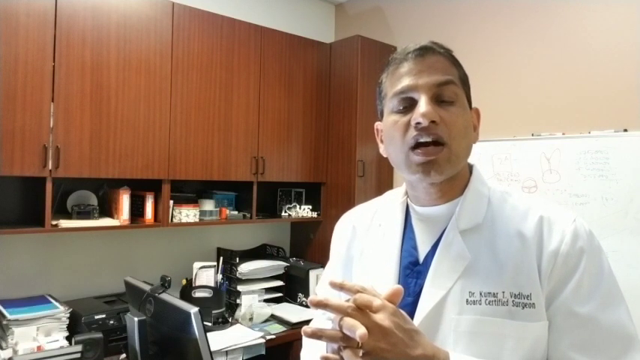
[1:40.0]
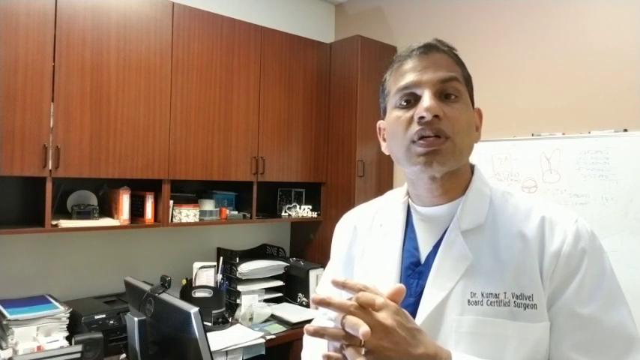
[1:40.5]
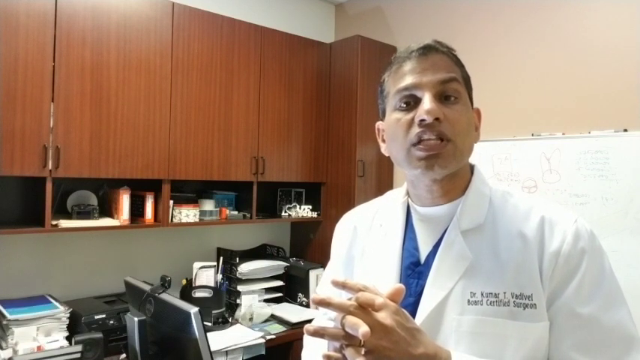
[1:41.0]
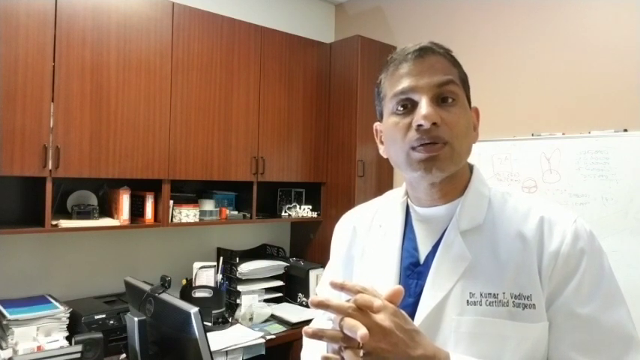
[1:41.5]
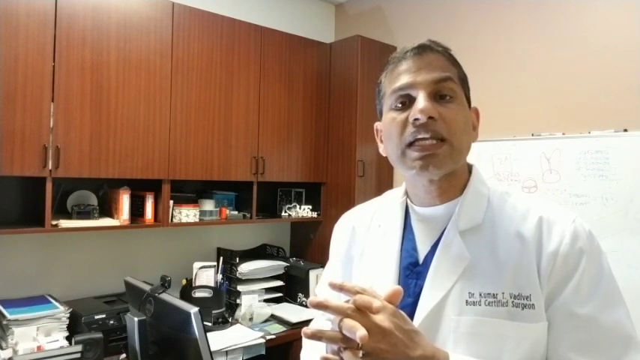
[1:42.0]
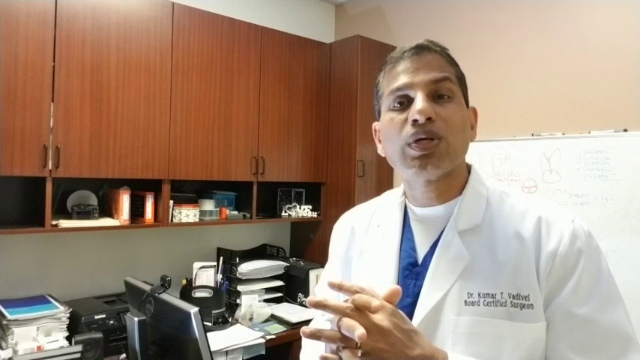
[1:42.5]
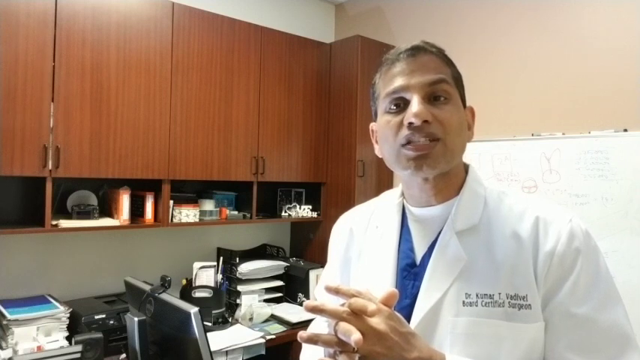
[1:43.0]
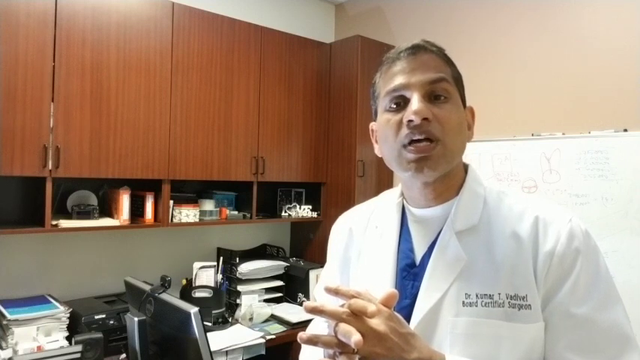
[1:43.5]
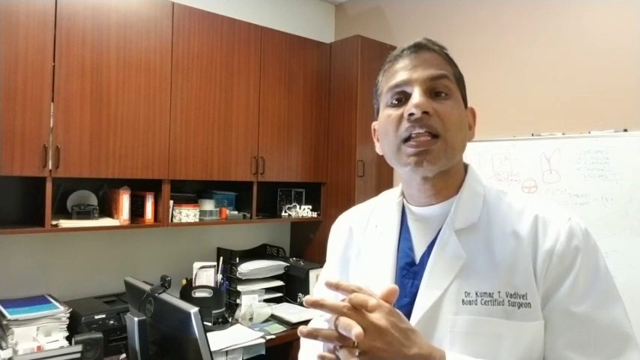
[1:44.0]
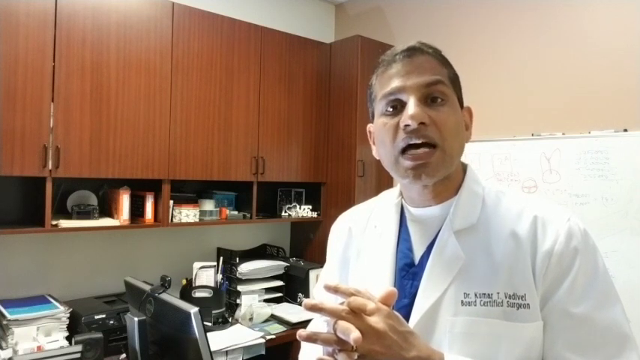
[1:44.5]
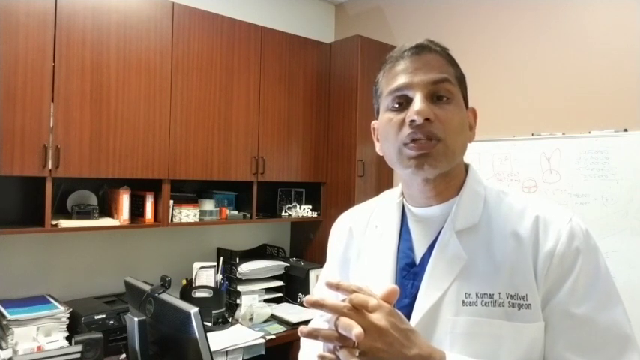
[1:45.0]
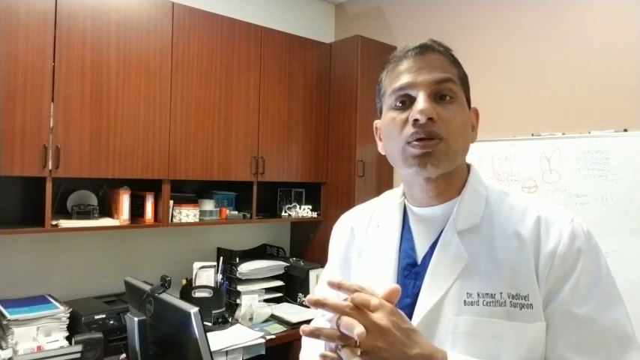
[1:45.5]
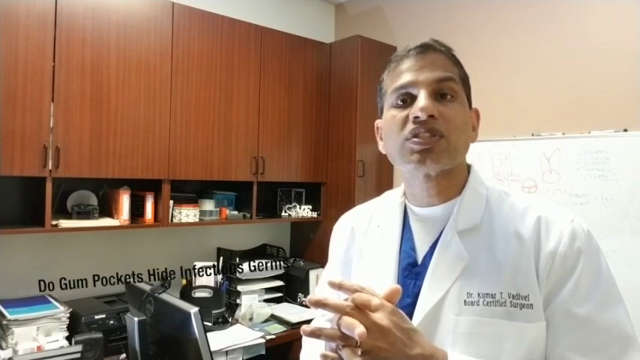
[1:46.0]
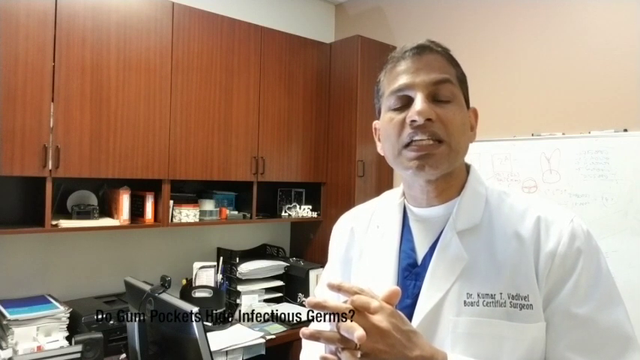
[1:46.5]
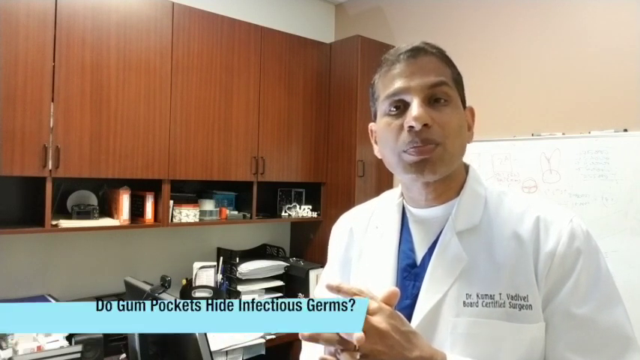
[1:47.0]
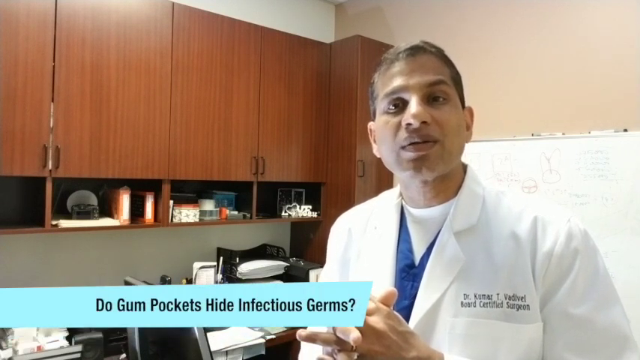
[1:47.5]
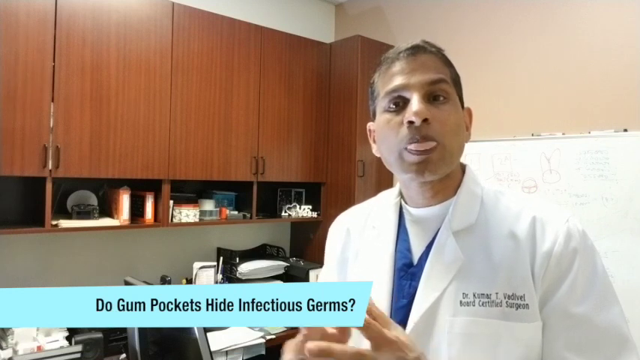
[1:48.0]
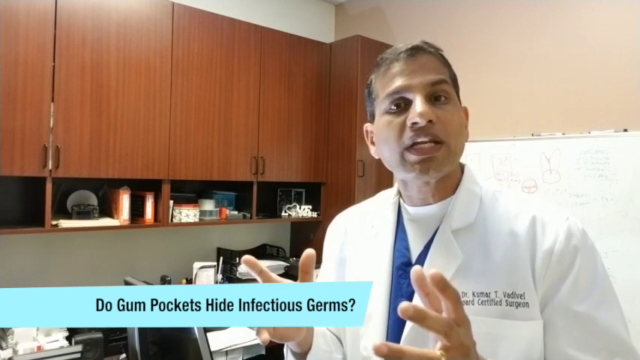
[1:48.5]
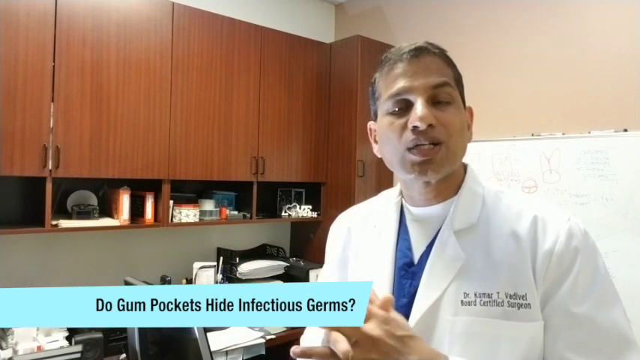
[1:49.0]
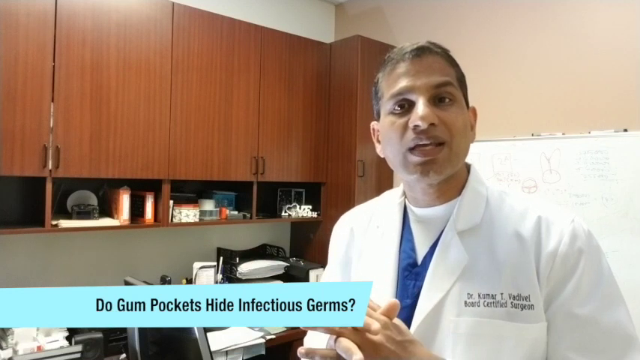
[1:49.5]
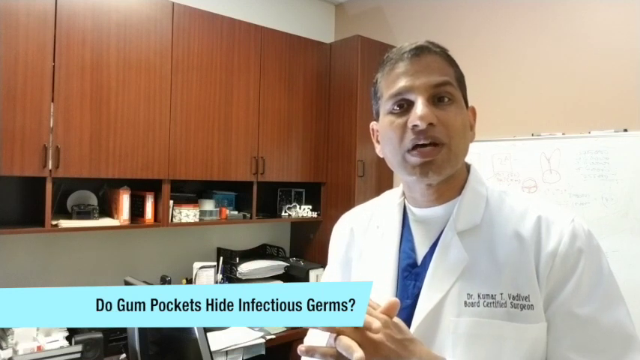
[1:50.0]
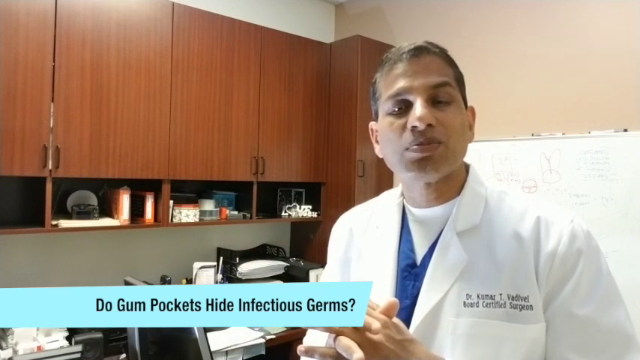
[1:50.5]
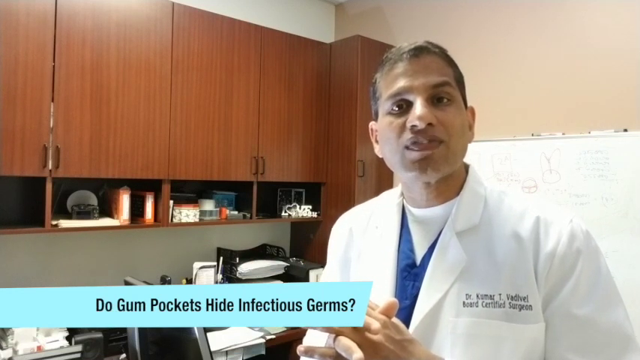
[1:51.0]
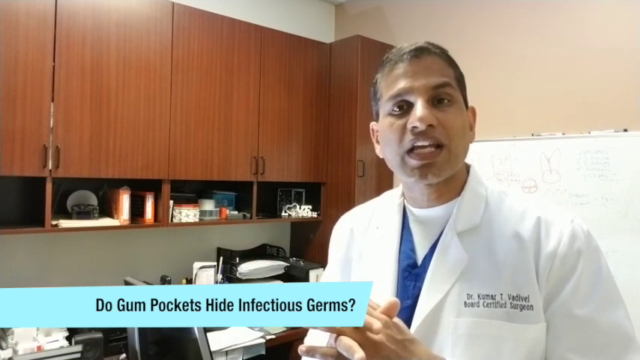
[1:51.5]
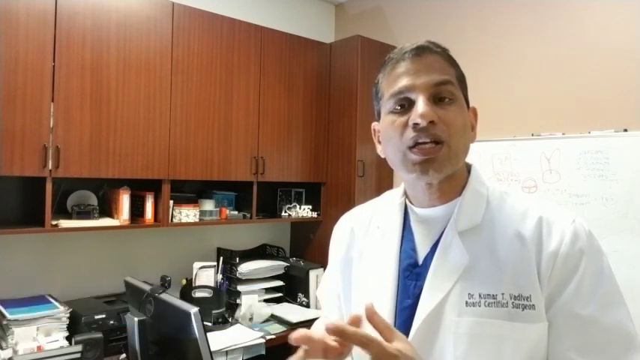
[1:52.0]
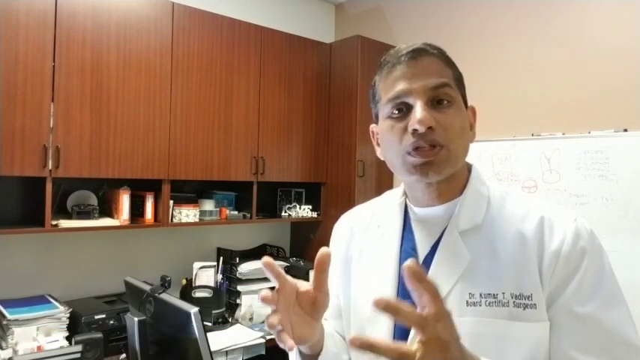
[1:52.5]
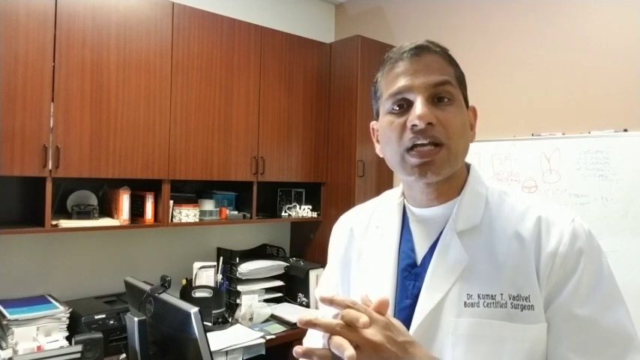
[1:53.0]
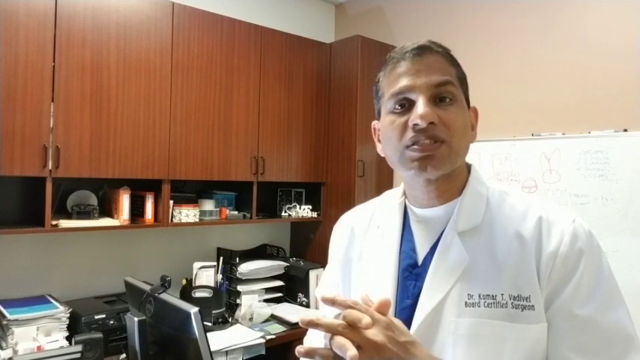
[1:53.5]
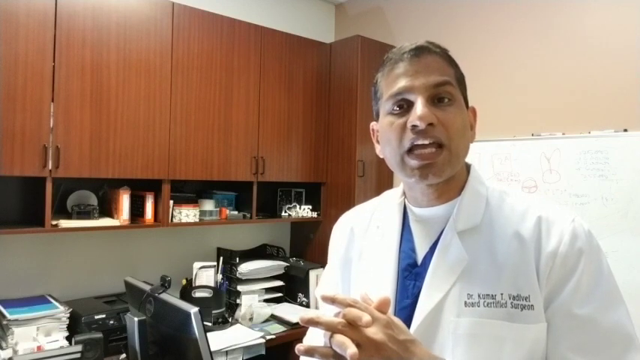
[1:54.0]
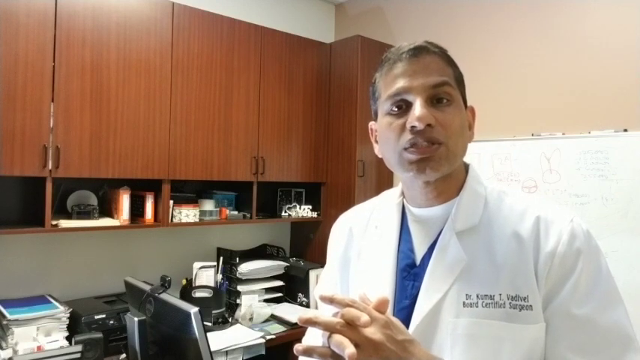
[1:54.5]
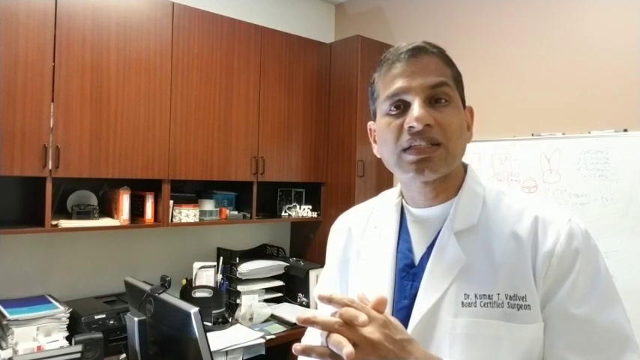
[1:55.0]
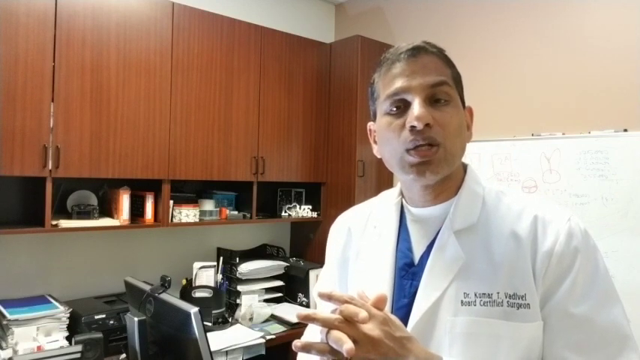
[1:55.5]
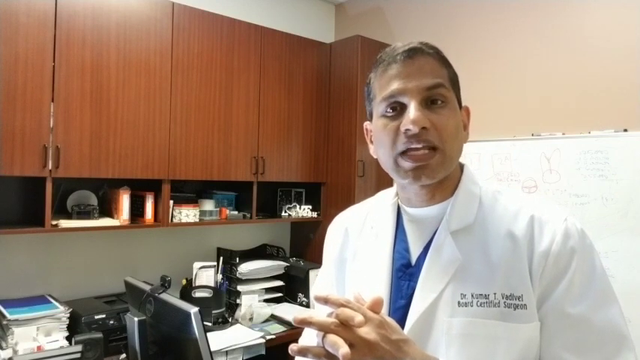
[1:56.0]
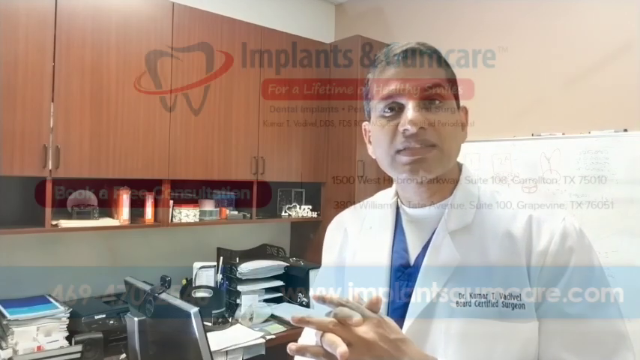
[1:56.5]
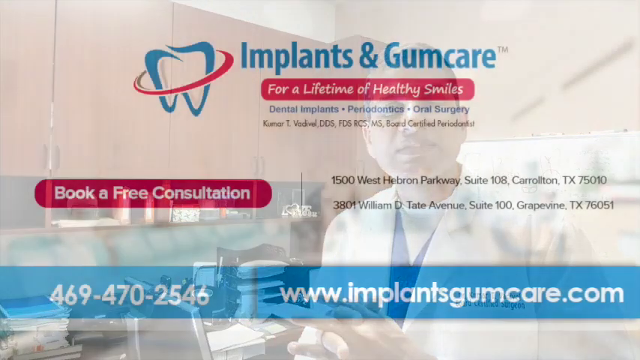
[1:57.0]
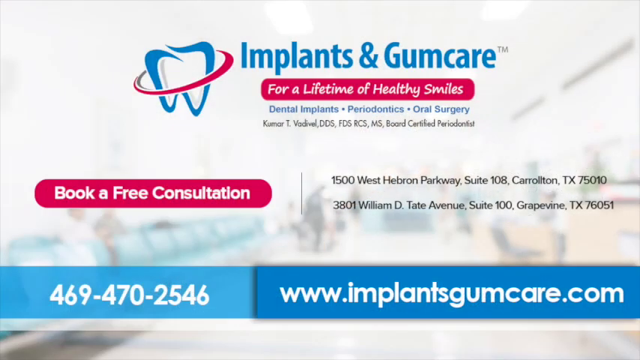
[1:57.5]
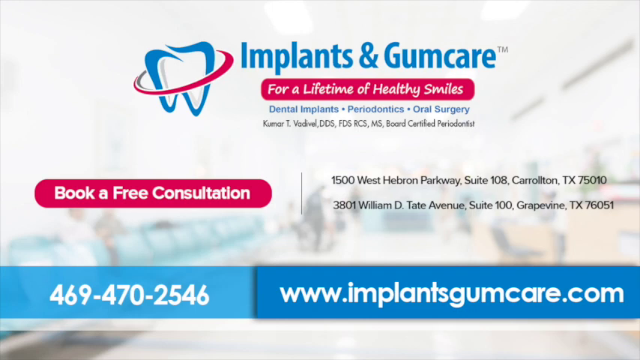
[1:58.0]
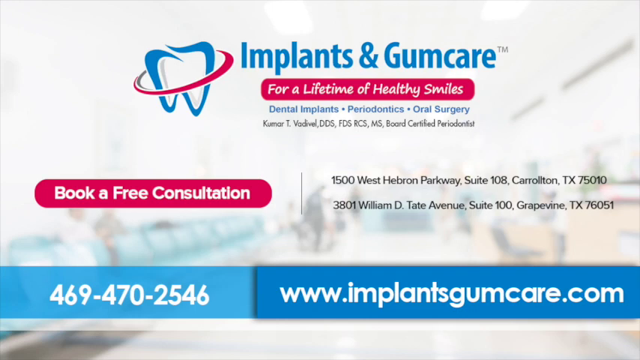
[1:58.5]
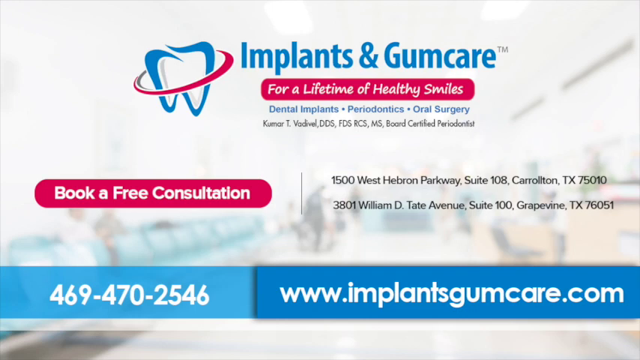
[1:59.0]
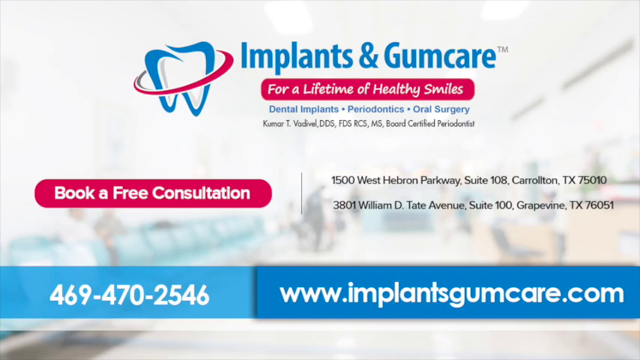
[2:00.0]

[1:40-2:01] A man talks to the camera wearing a white lab coat, with blue scrubs and a white t-shirt under it. His name is embroidered above the left breast pocket: "Dr. Kumar T. Vadivel board certified surgeon". He talks passionately into the camera, his clasped hands visible, raised, at the bottom of the screen, and a wedding ring is visible on his right hand. To his left are brown wood veneer wall cabinets above a desk with a Dell computer monitor, a printer, and various file in and out trays containing white paper. As he speaks, black text appears at the bottom left reading "do gum pockets hide infectious germs", and a blue bar appears behind it. He occasionally unclasps his hands for emphasis, then clasps them again. The screen then changes to an information screen. Its title, in light blue, is "Implants and Gum Care", with a red stripe under it containing white text reading "For a Lifetime of Health". Below that, separated by periods, are three items: "Dental Implants", "Periodontics" and "Oral Surgery", followed by the man's name, "Kumar T. Vadivel, DDS, FDS, RCS, MS Board Certified Periodontist". Below and to the left, a red pill-shaped box contains white text reading "Book Free Consultation". To the right of it are two addresses: "1500 West Hebron Parkway, Suite 108, Carrollton, TX75010" and "3801 William D. Tate Avenue, Suite 100, Grapevine, TX76051". Beneath everything, a blue stripe runs from the far left to the far right of the screen with the telephone number "469 470 2546" and the web address "www.implantsgumcare.com". Behind it all is a grey-white background with a faintly visible blurred image of what appears to be a waiting room.